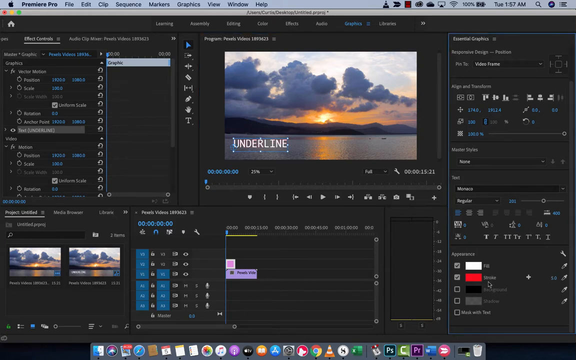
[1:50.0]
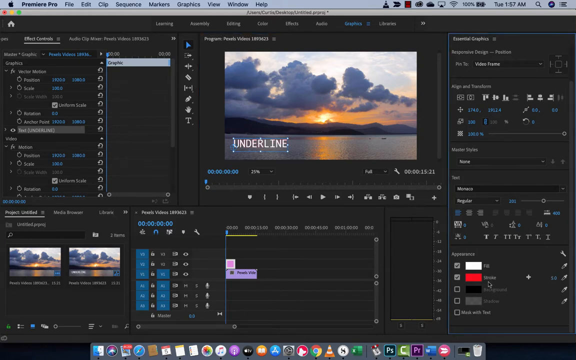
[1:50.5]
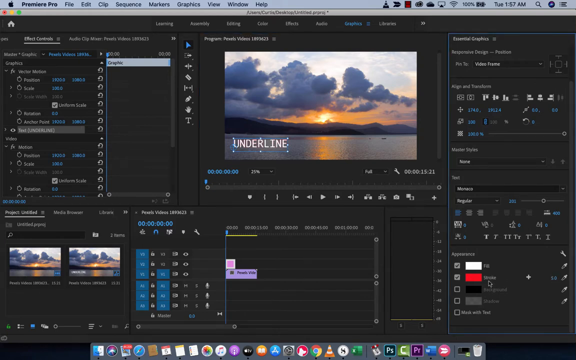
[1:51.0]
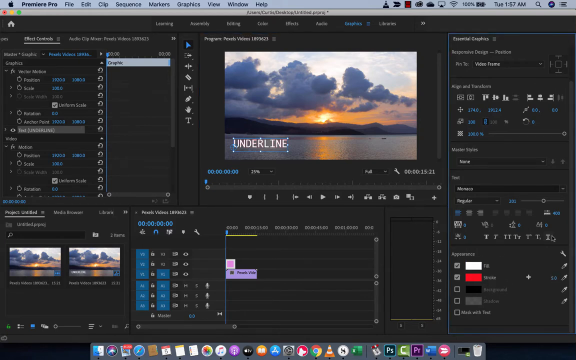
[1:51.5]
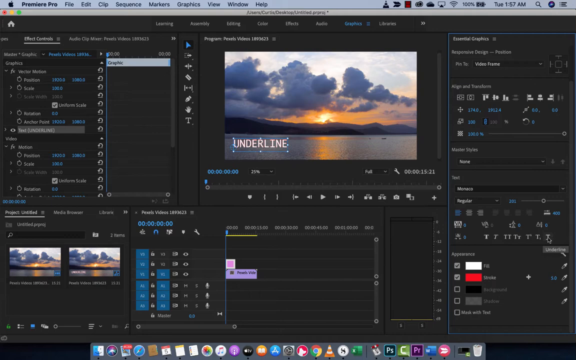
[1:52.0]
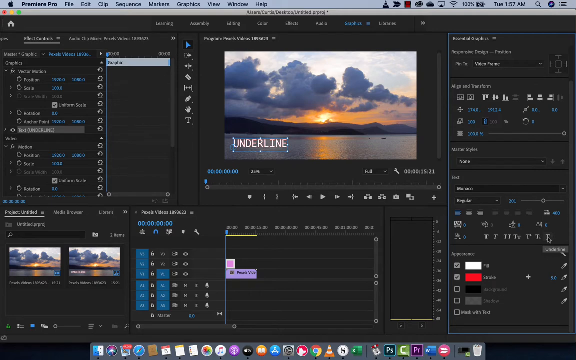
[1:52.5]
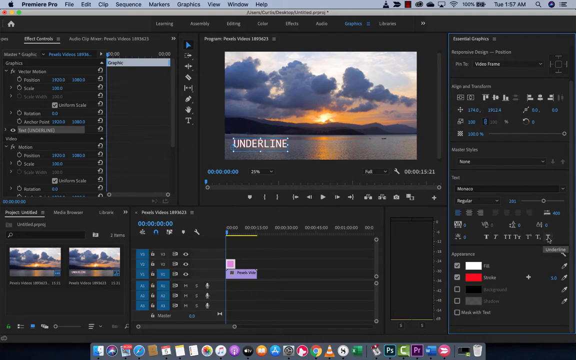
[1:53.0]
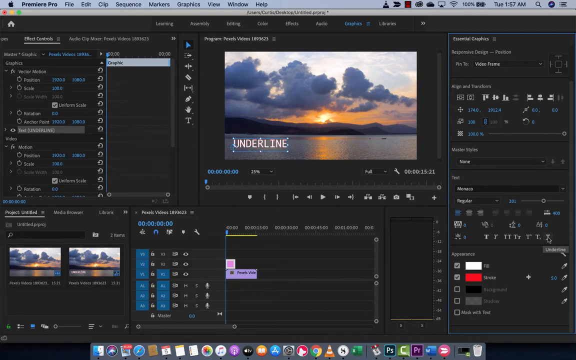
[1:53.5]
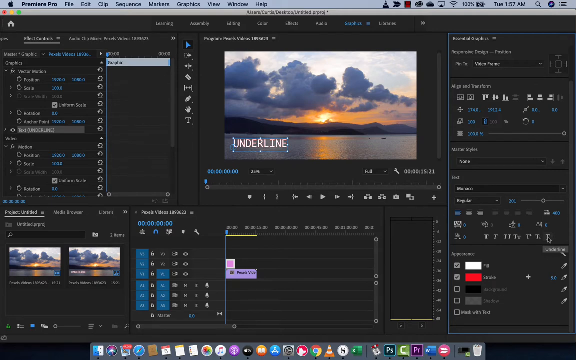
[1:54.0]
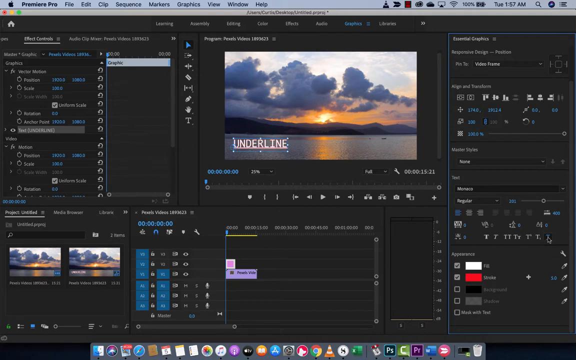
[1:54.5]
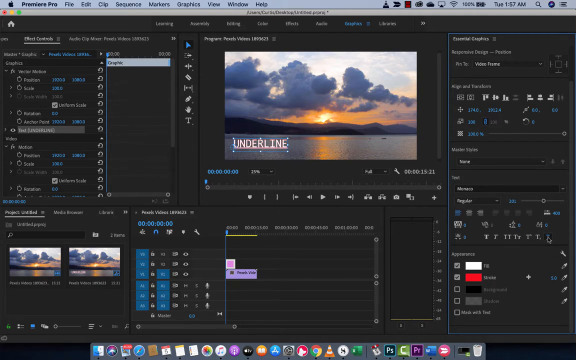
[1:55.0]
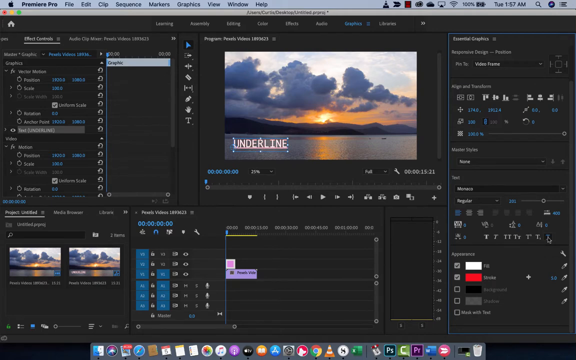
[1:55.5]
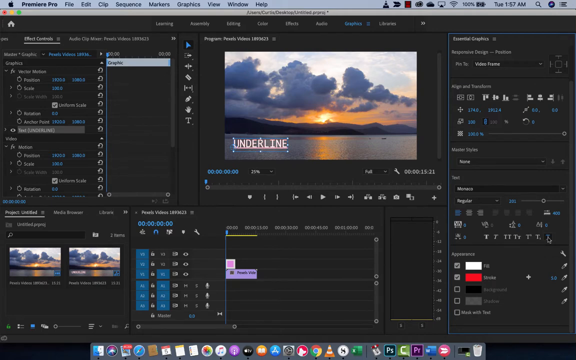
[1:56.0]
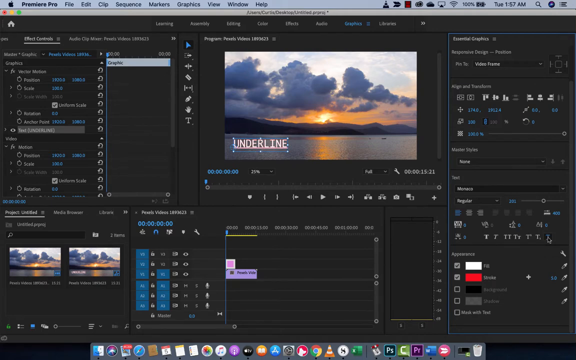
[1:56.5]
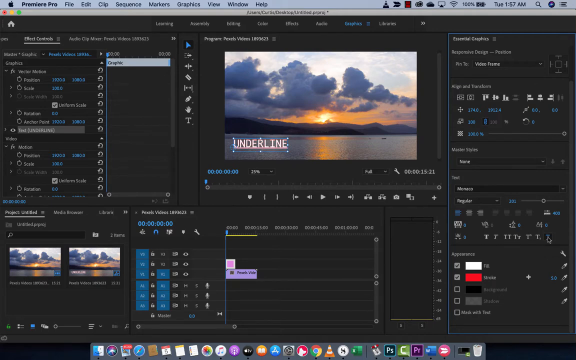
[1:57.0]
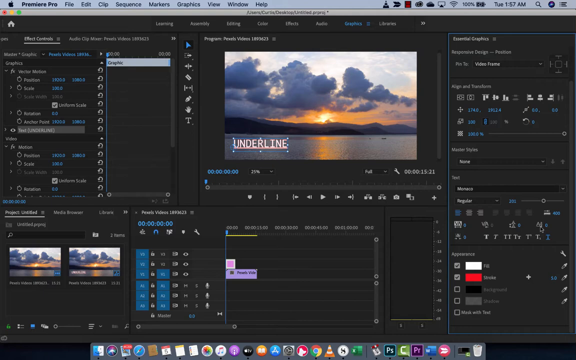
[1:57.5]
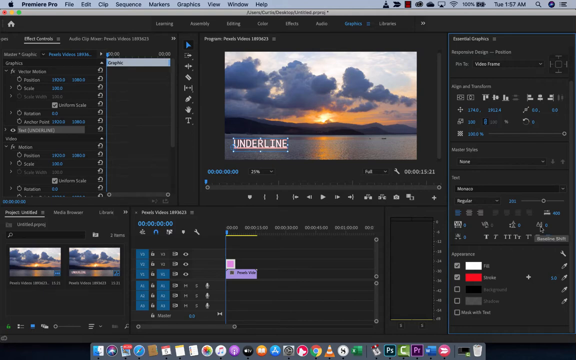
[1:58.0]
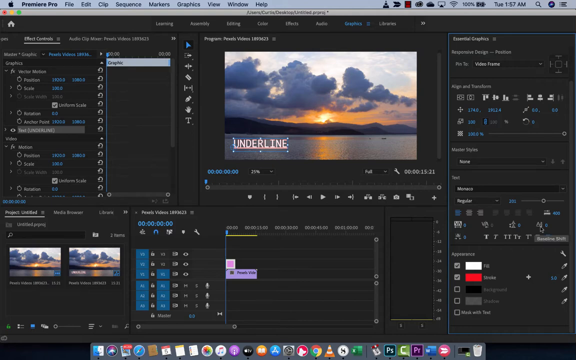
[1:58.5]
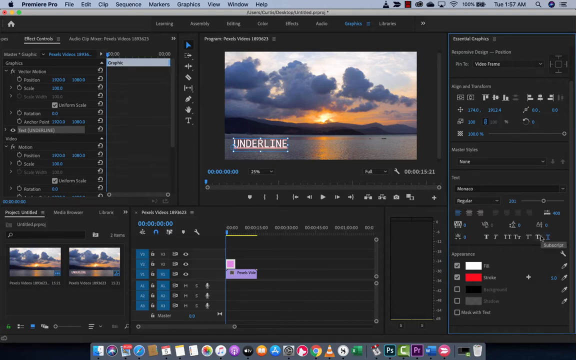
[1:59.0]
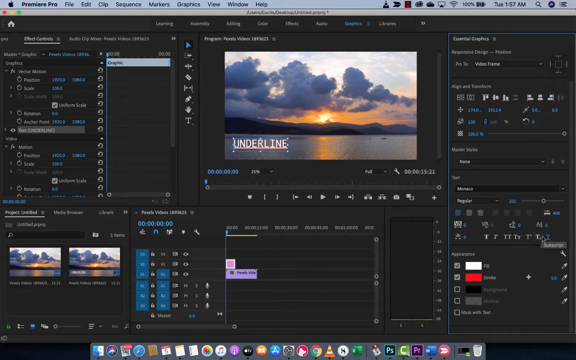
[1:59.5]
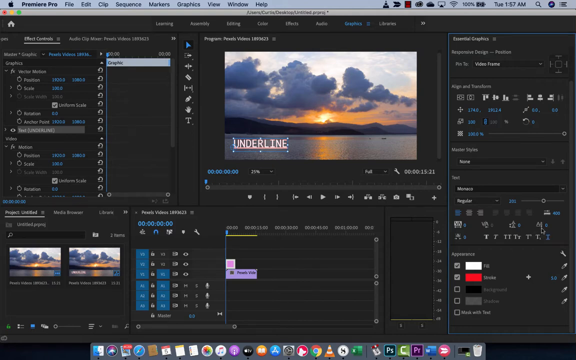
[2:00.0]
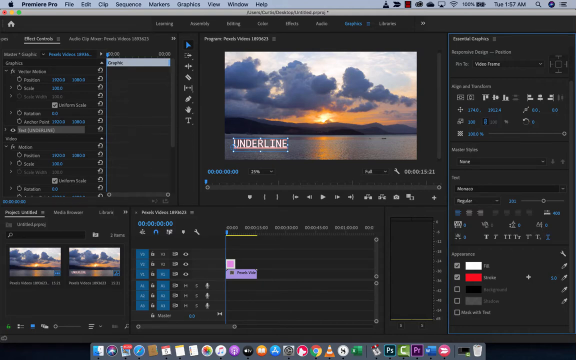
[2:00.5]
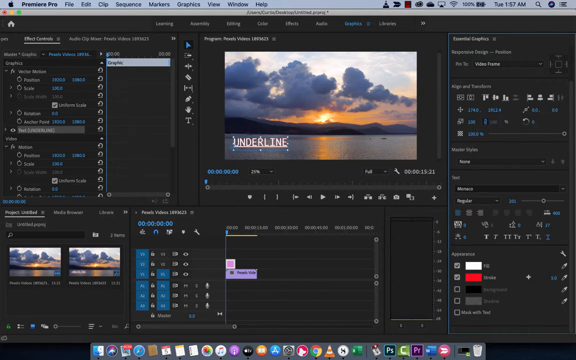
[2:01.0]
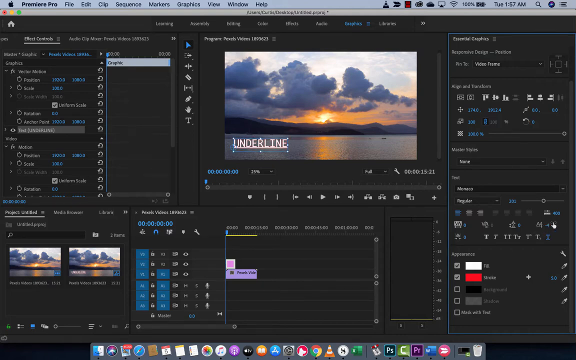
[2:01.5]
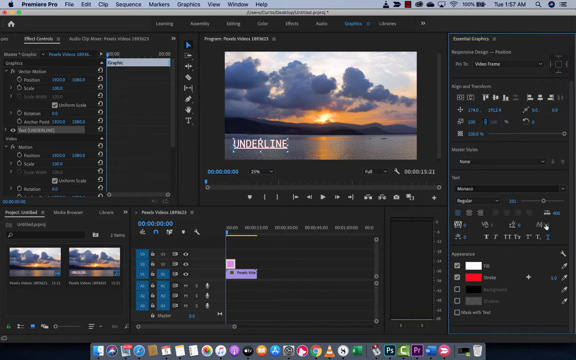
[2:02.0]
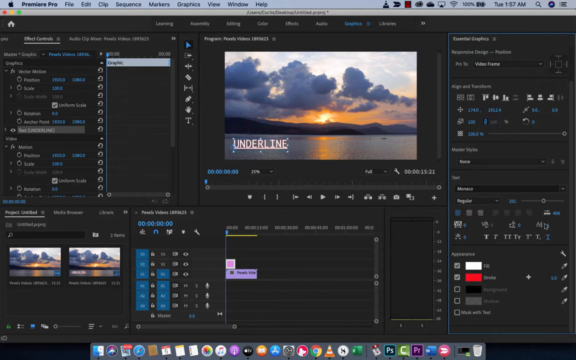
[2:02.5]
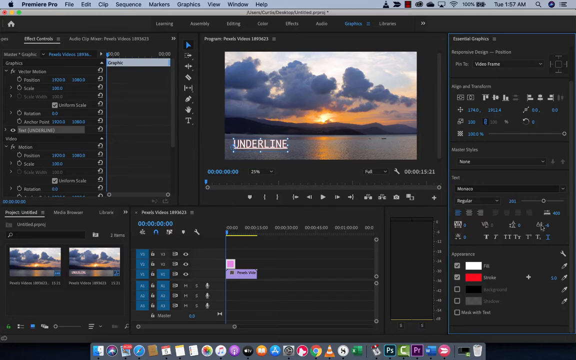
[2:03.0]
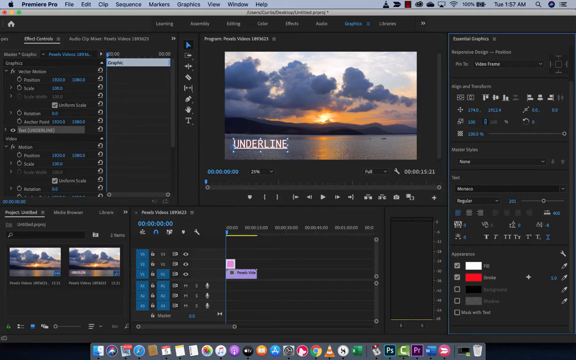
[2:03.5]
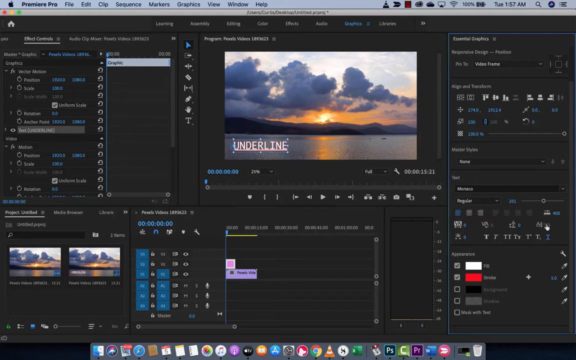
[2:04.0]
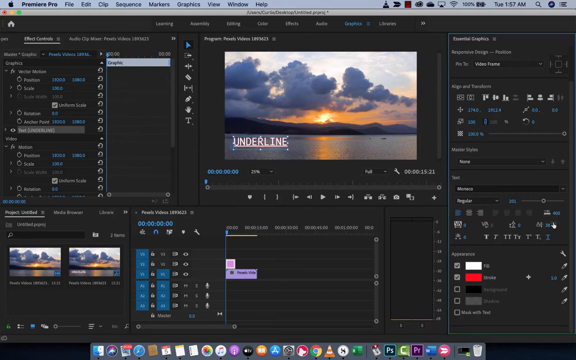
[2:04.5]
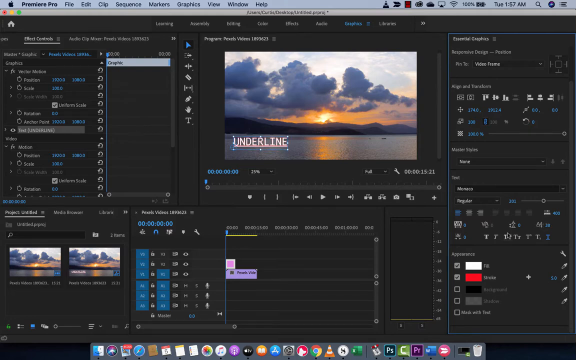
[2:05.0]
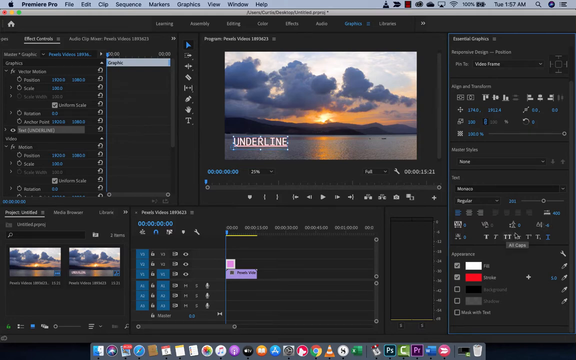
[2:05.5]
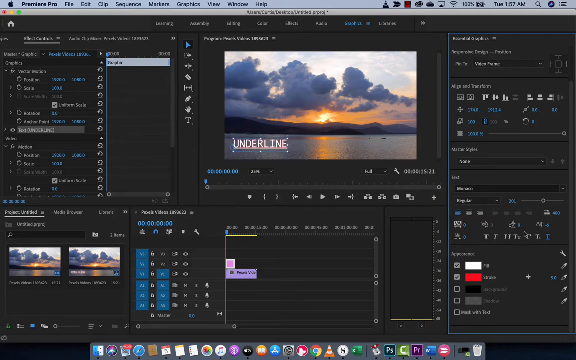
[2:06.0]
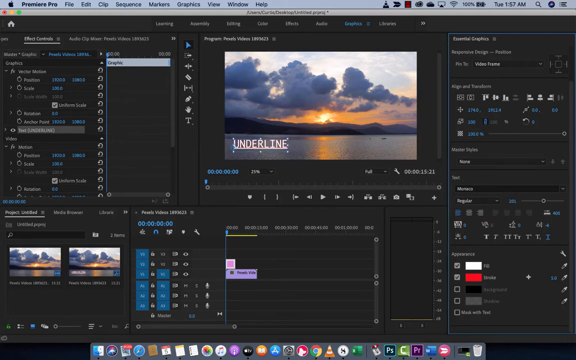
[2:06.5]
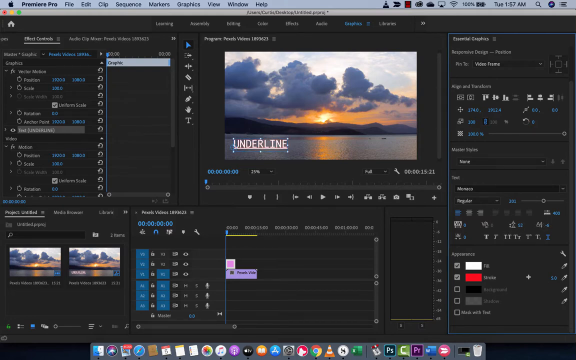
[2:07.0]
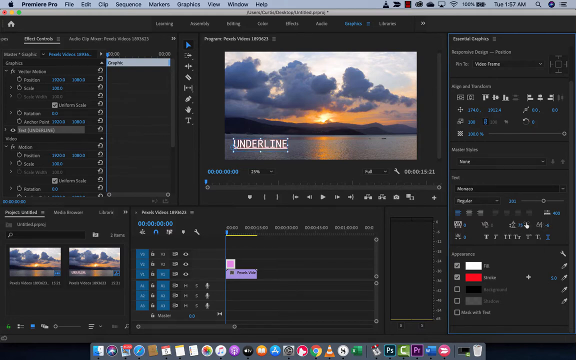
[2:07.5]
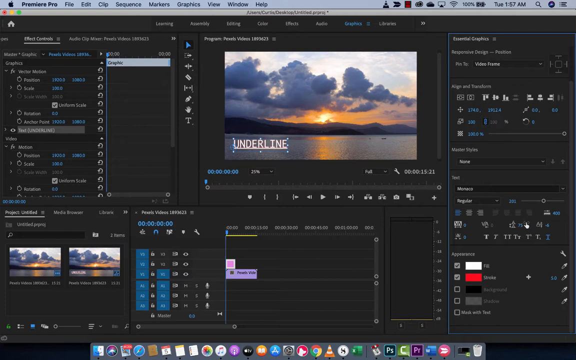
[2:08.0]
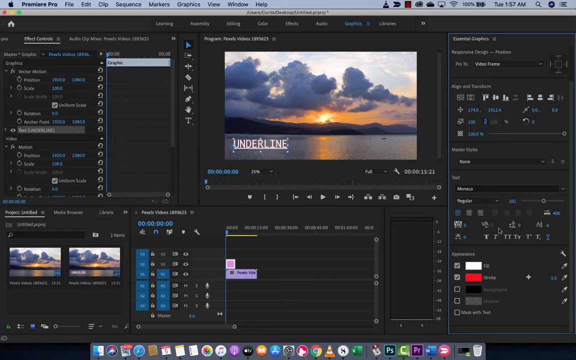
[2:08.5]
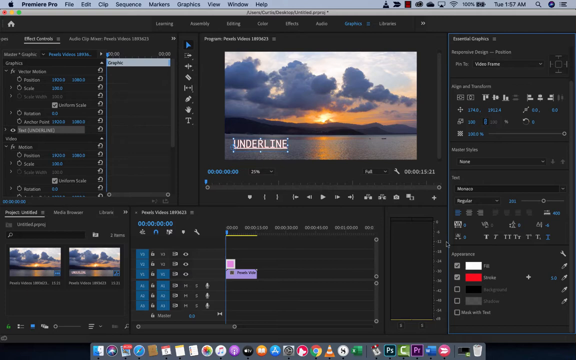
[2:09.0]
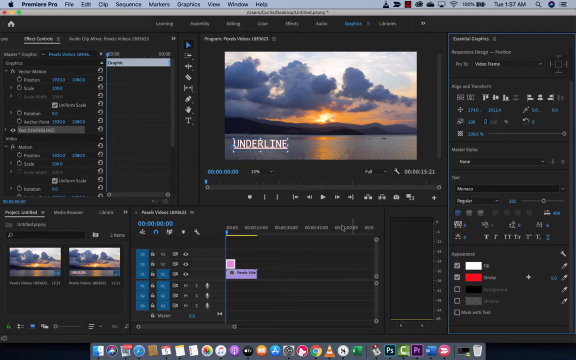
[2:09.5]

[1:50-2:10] A program called Premiere Pro, labeled "Premiere Pro" at its top left, shows various tools across a gray background. The prominent element is an image of a sunset with clouds and water, possibly a lake, with text at its bottom left that says "underline". The mouse cursor moves to the right of the screen, from some color options up slightly to the right to what looks like an underline tool, and stays there. It appears to click it, as the tool turns black and the T turns blue. The cursor then highlights the option directly above, goes down to the one below it, and clicks something beside one of the icons, seemingly changing an element in the picture.